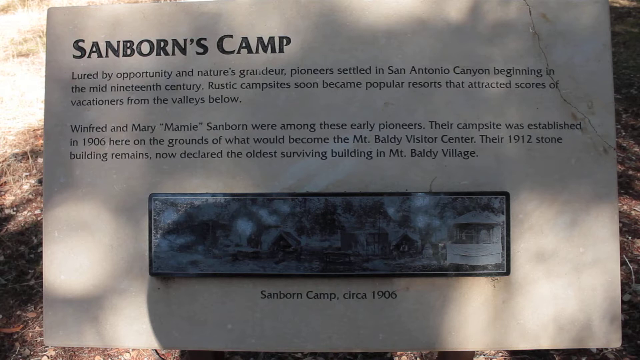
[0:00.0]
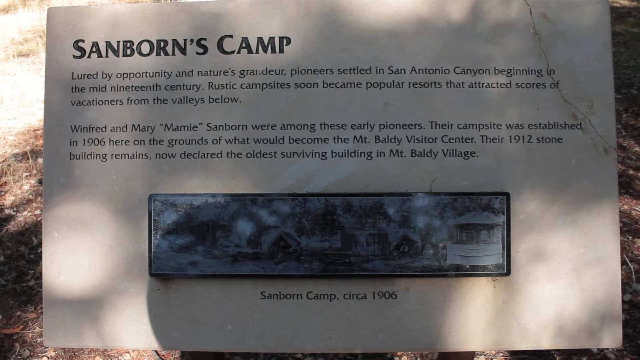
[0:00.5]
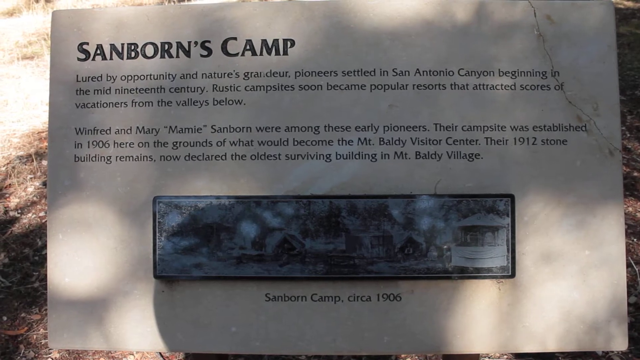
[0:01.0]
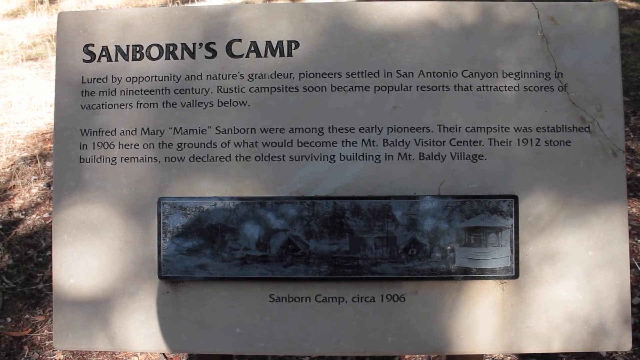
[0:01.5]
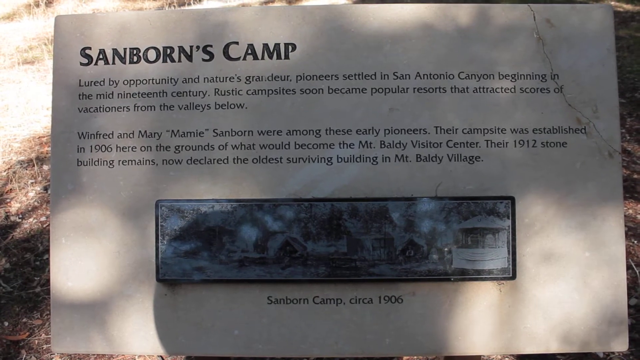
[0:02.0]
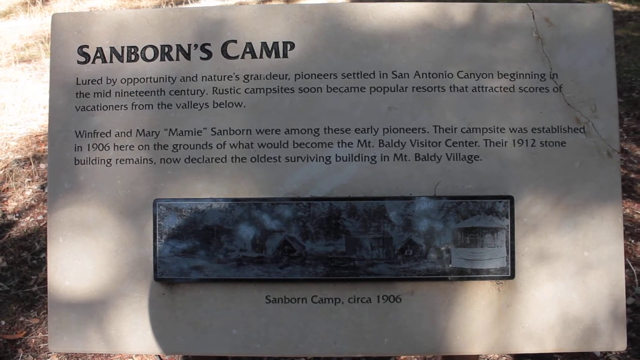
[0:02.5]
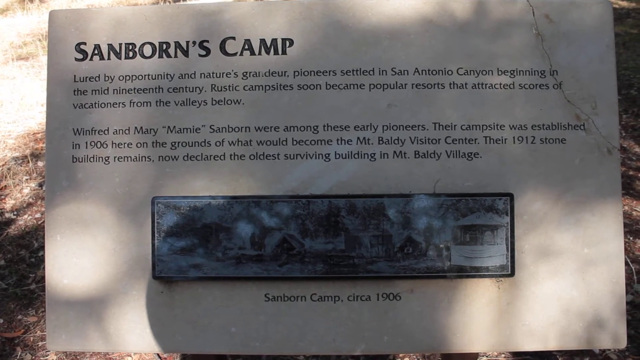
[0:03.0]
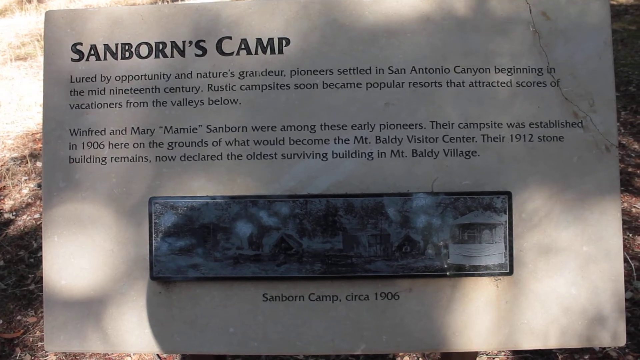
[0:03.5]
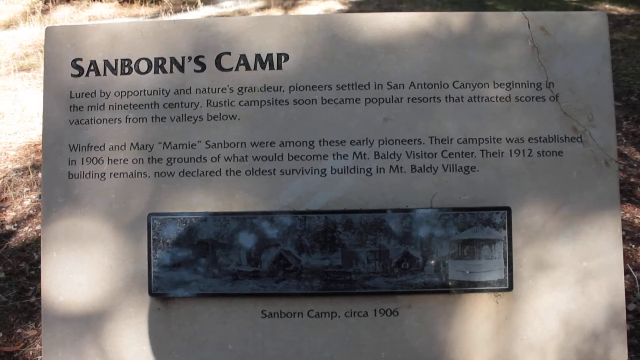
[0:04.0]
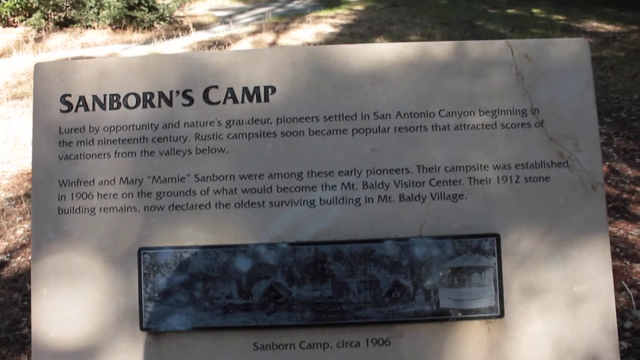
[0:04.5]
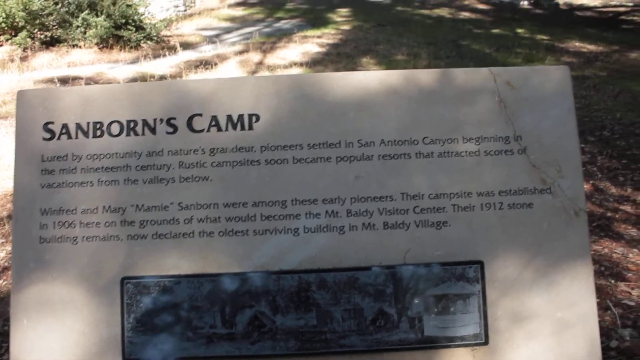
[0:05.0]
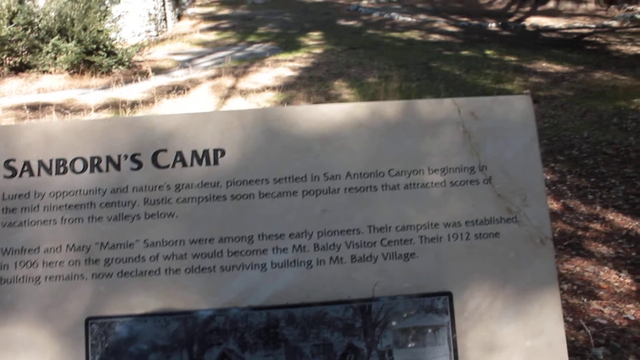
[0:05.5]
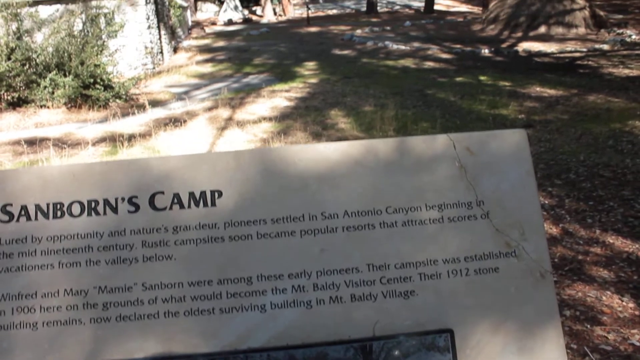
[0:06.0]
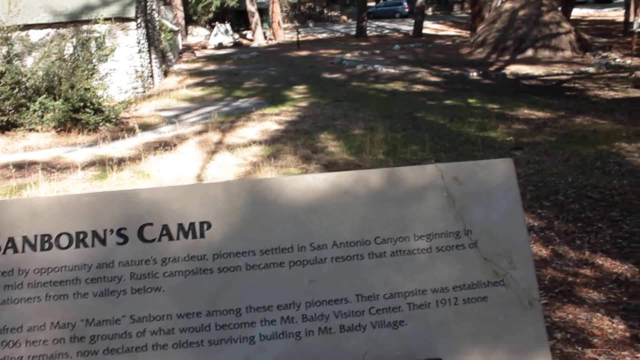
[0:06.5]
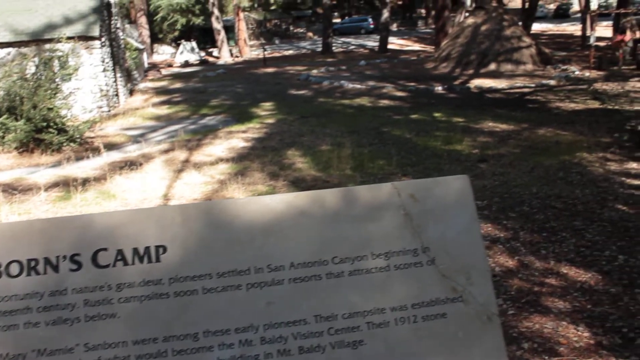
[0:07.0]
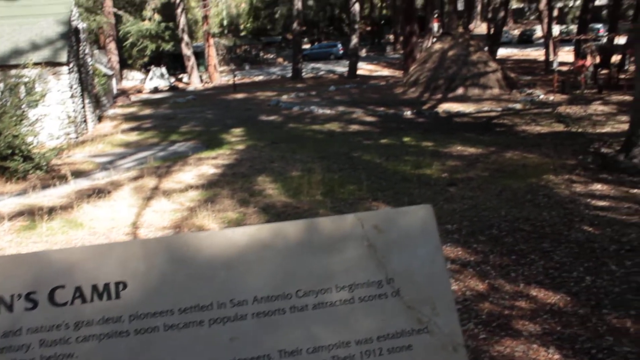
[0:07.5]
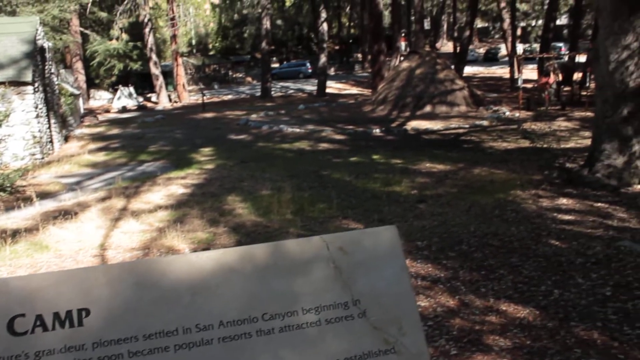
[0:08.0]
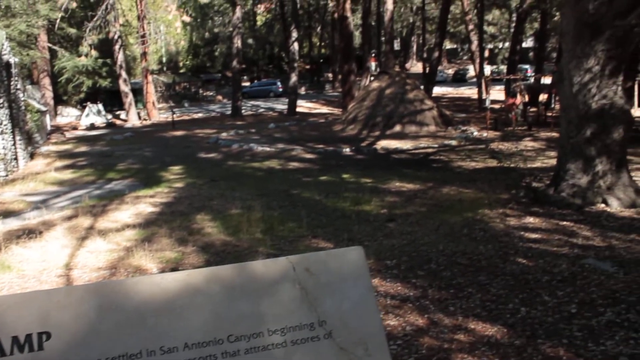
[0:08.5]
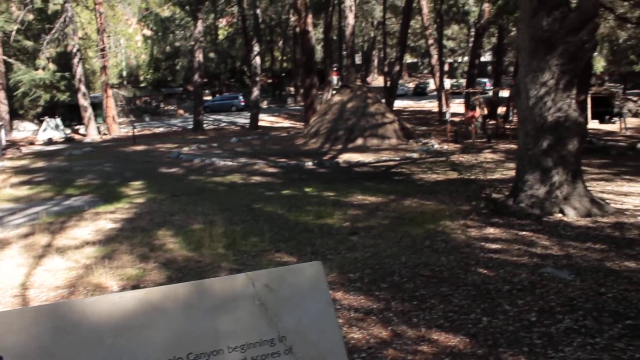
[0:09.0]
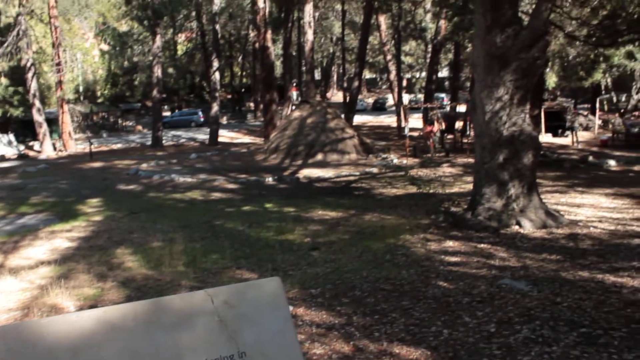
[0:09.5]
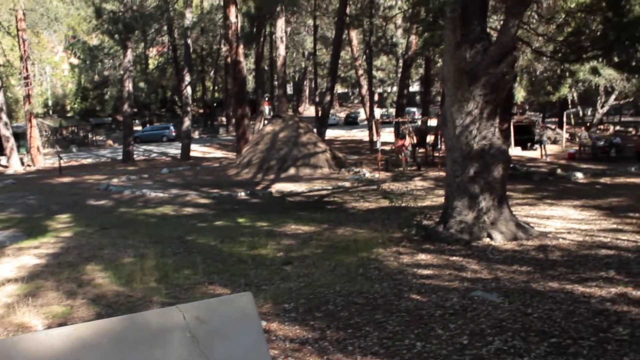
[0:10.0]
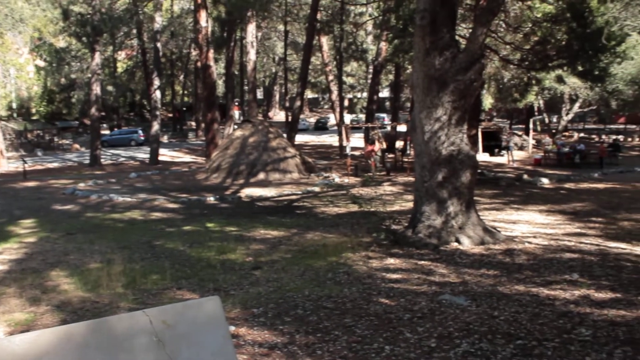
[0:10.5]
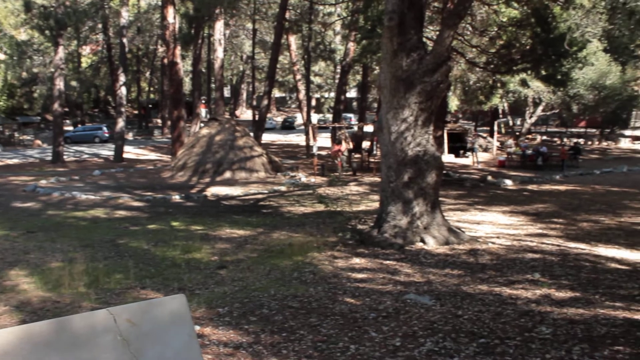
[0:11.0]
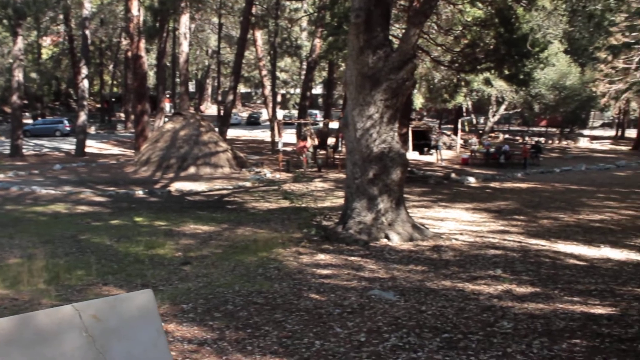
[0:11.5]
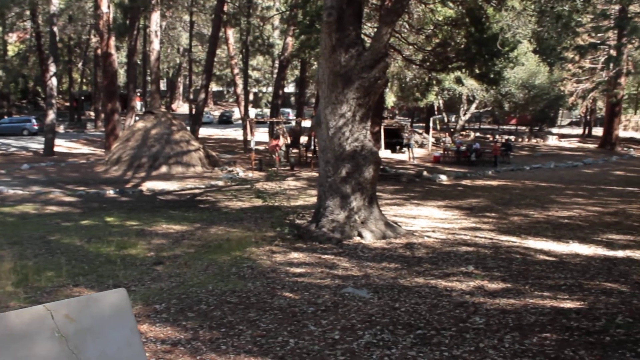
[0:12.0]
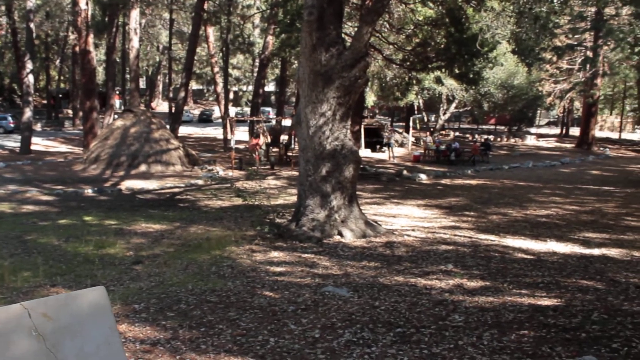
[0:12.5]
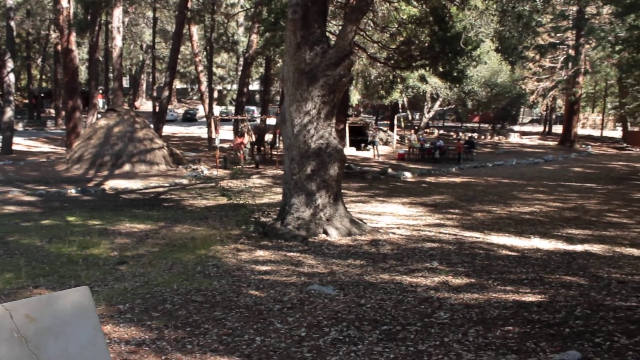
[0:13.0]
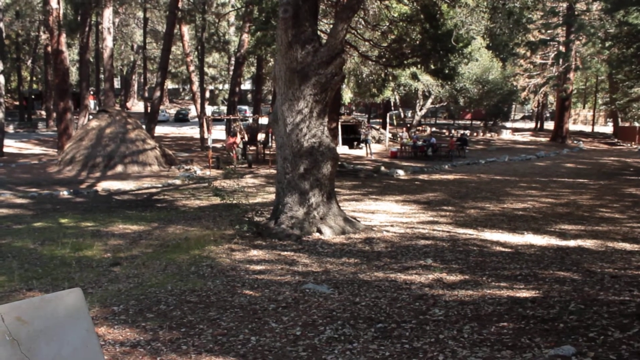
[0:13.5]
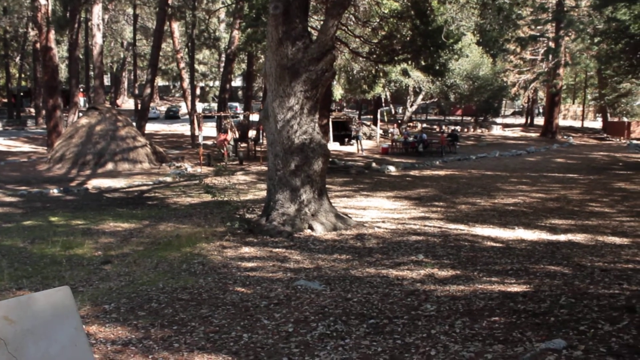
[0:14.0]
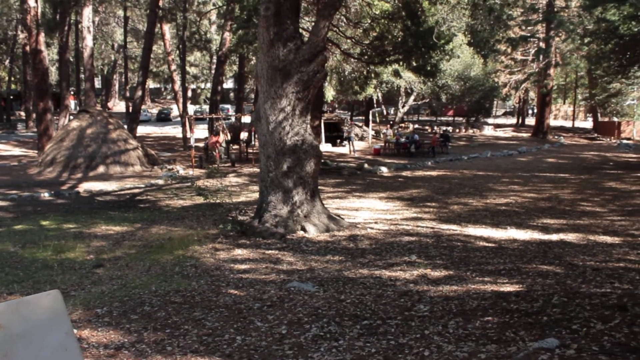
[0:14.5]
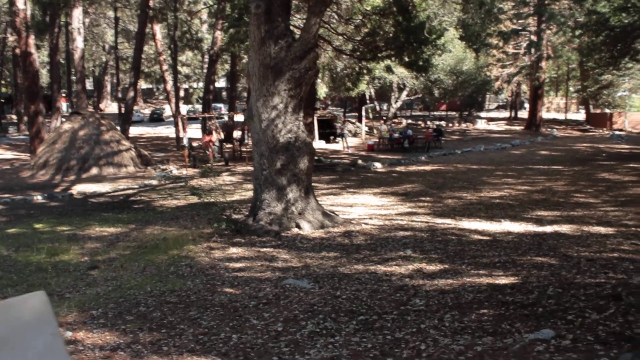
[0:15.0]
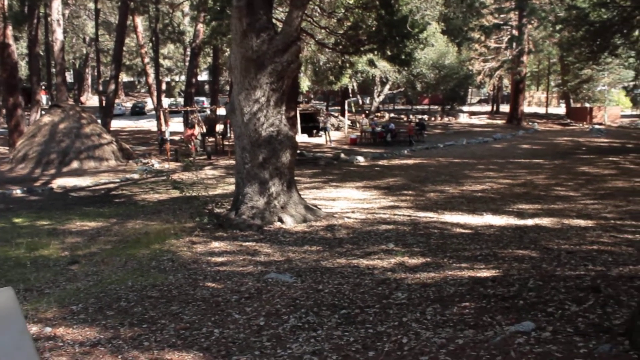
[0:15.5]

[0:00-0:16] The video opens on a large informational tablet about Sanborn's camp. Its text reads "lured by opportunity and nature's grandeur, pioneers in San Antonio, beginning in the 19th century" and "rustic campsites soon became popular resorts that attracted vacationers from the valleys below." The panel also mentions two of the early pioneers involved in setting up these camps, when they established their campgrounds, and how the site became the visitor center of Mount Boldy over time. At the bottom of the panel is a large horizontal black-and-white drawing of the original campsite. The camera then pans upward from the panel to what appears to be a wooded area, with a large dirt hill in the middle, a swing set to the right, and a series of what are apparently pine trees littering the area. In the mid ground, children are playing on a children's playground, and people seem to be picnicking in the area.